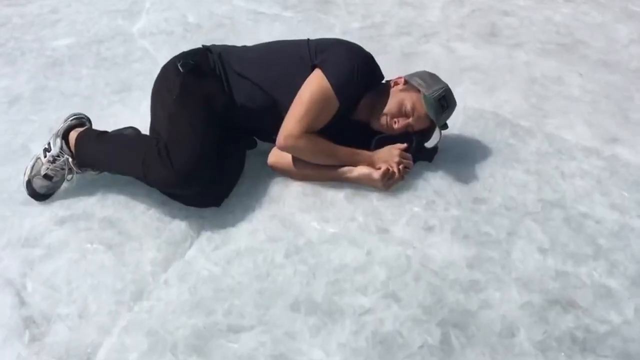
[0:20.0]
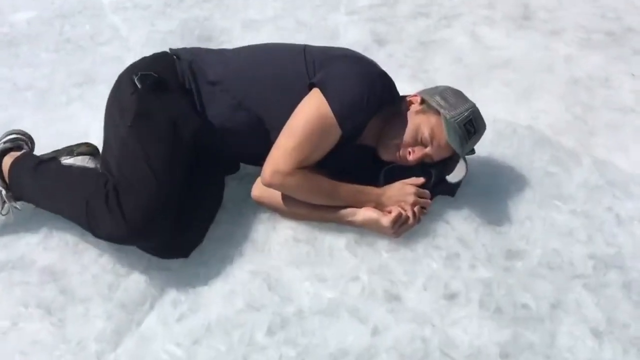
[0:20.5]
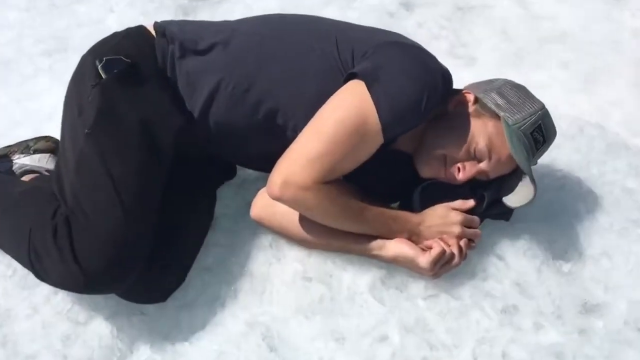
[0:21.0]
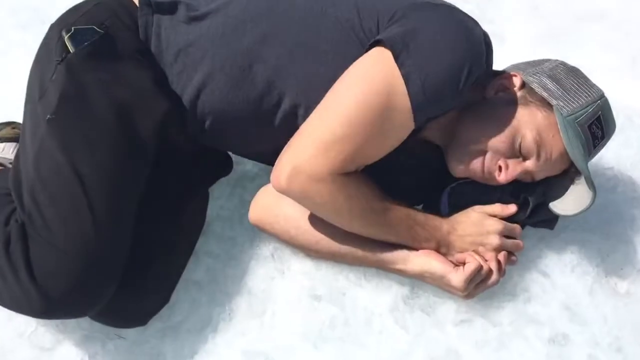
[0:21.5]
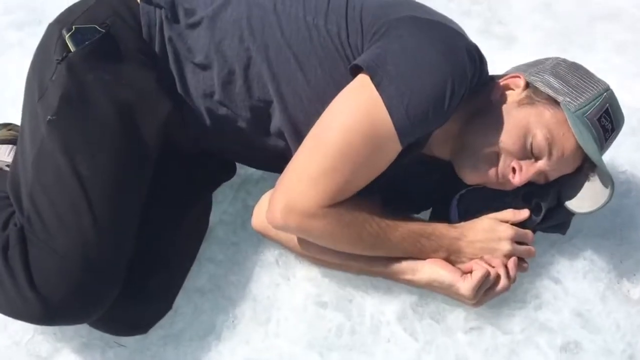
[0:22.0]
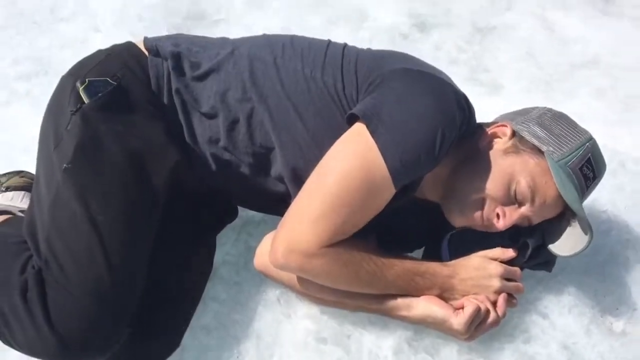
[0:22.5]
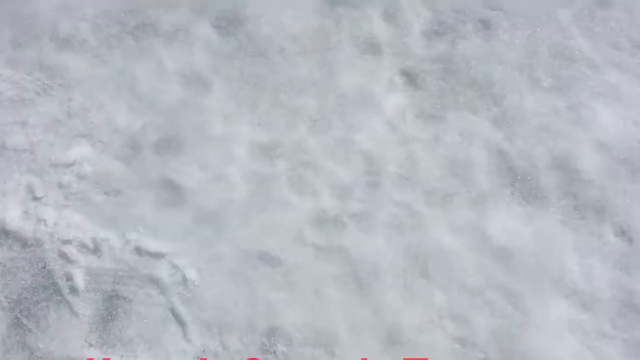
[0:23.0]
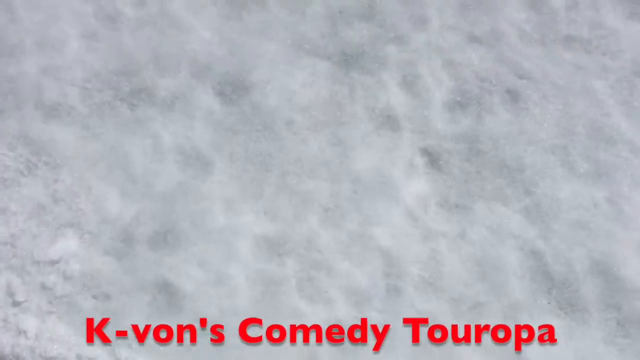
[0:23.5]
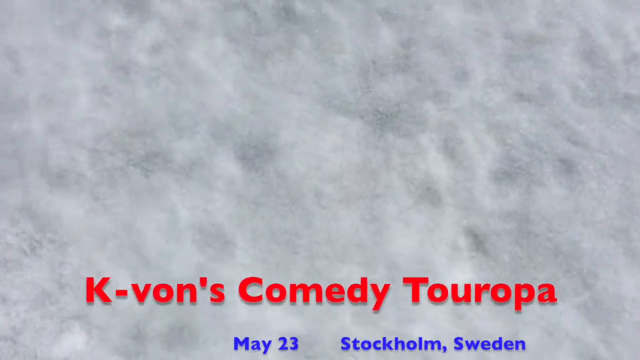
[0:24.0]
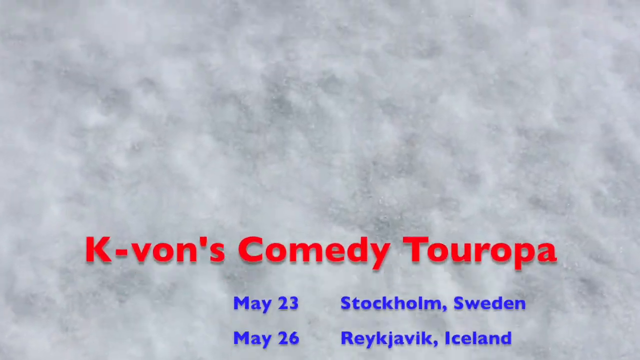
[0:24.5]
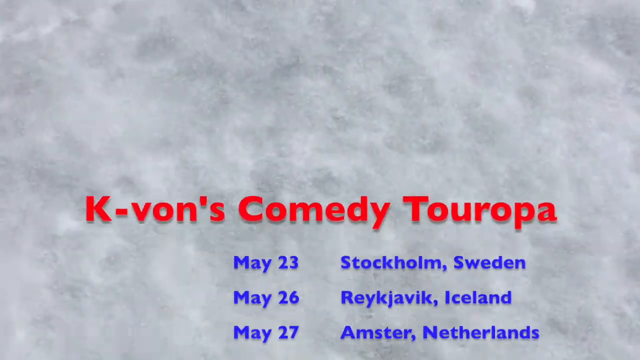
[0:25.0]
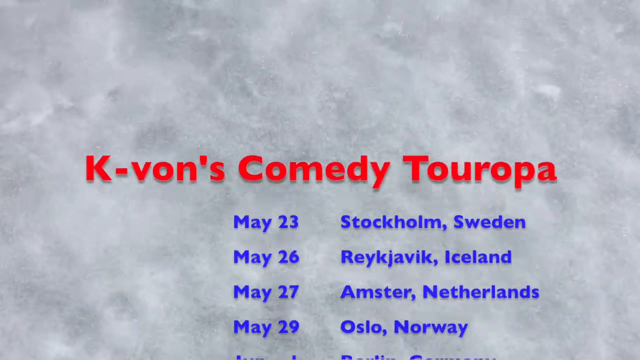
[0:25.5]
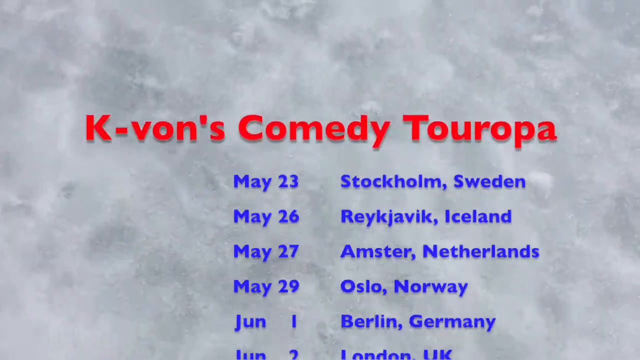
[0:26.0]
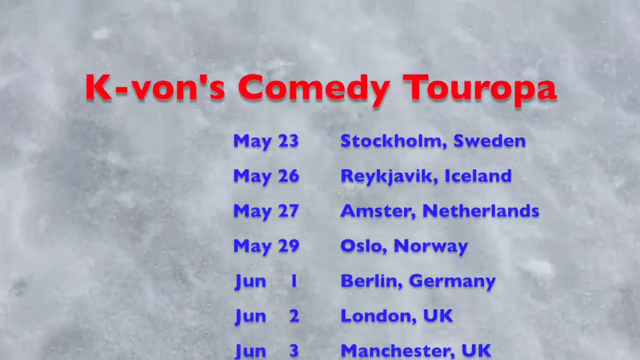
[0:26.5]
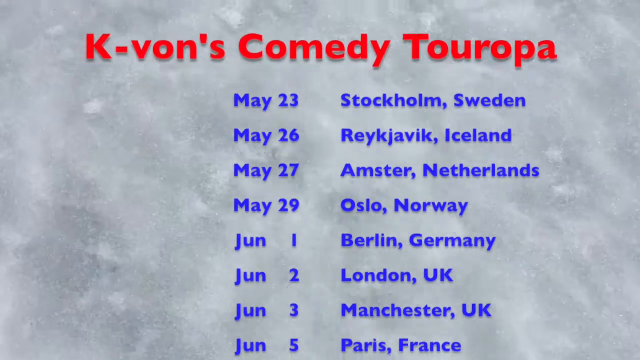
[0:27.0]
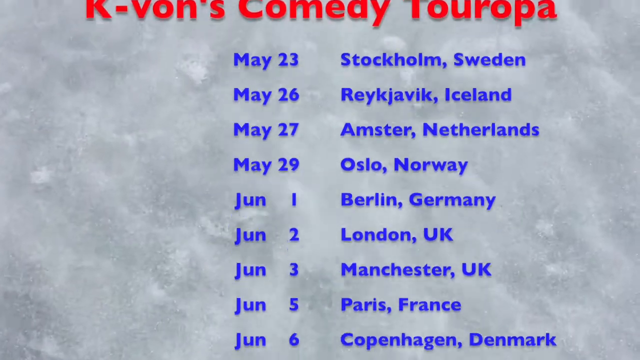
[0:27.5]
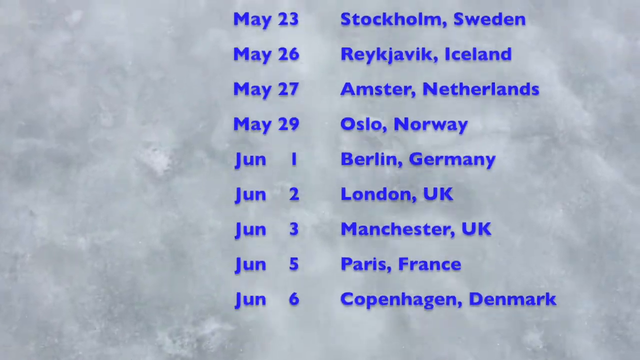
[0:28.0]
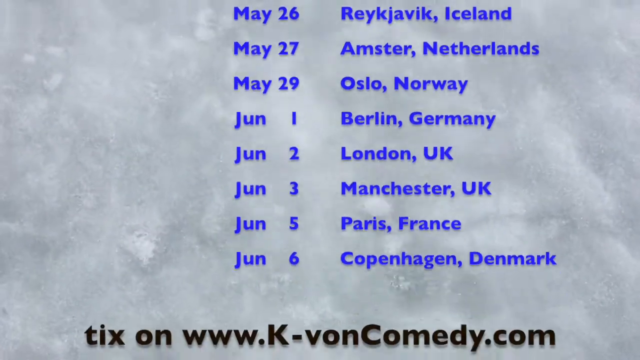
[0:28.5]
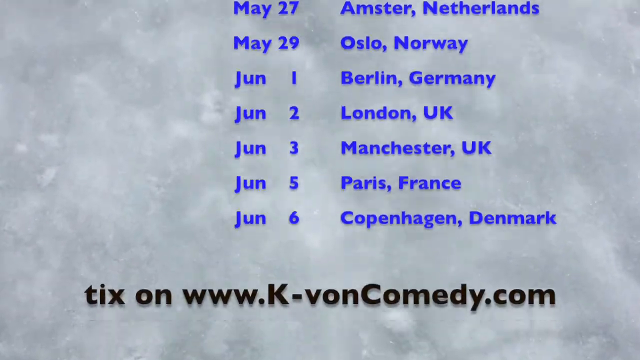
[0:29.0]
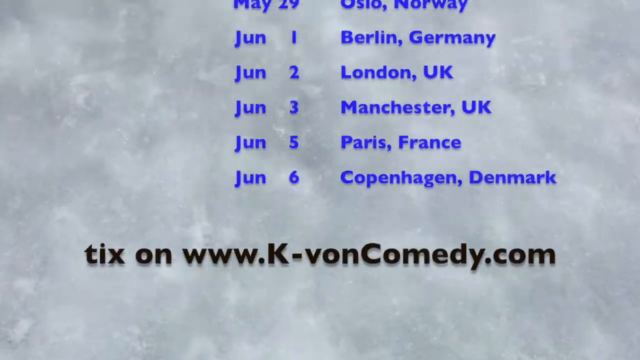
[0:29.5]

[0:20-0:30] A man lies on the snow wearing a black t-shirt, brown sweats, shoes, and a gray baseball cap. Some clothes are scrunched up, and he rests his head on them, appearing to pretend to sleep. The video cuts to a close-up of snow, and text in white or red reads "Kayvon's comedy to Europa." A list of dates with many cities scrolls from the bottom to the top of the screen, followed by a person's website.